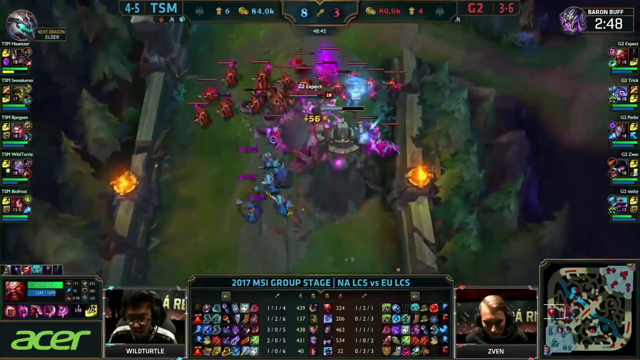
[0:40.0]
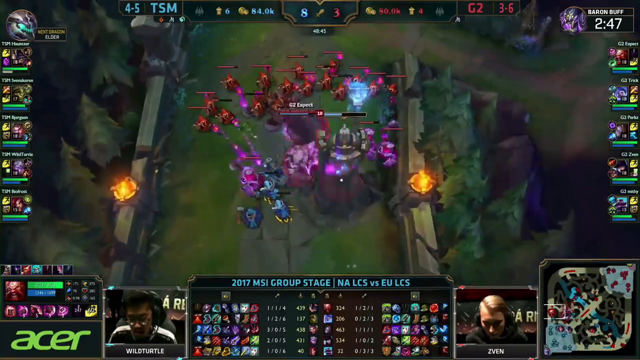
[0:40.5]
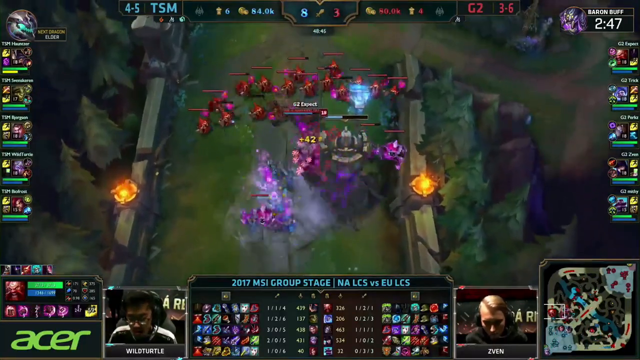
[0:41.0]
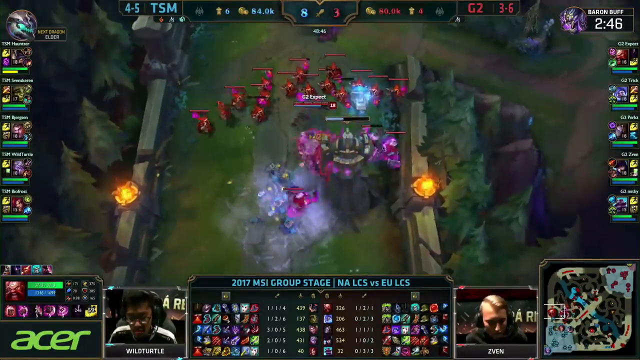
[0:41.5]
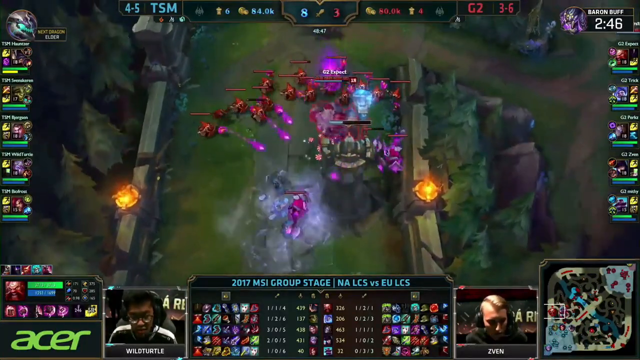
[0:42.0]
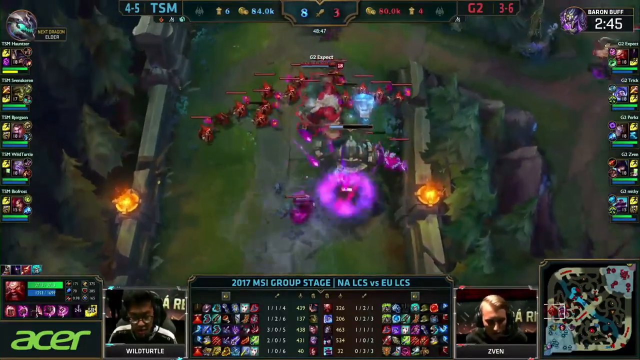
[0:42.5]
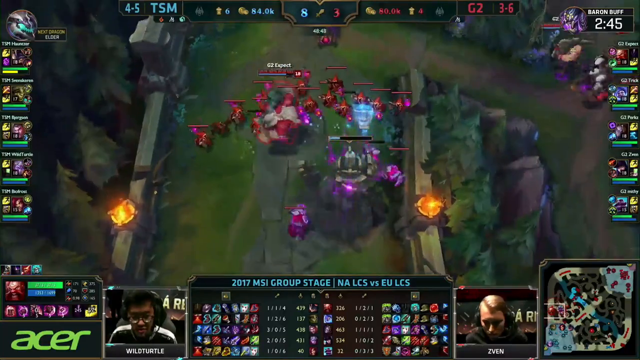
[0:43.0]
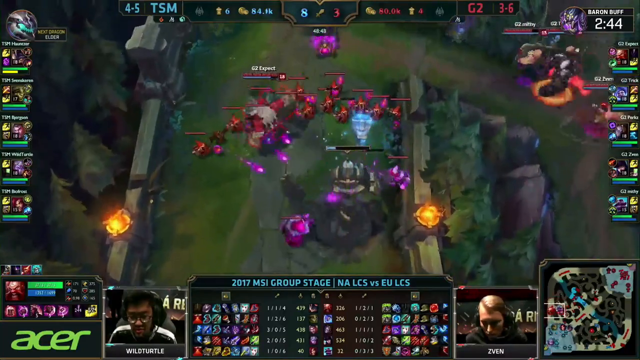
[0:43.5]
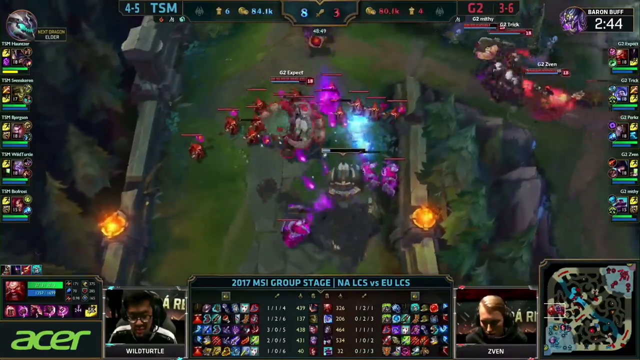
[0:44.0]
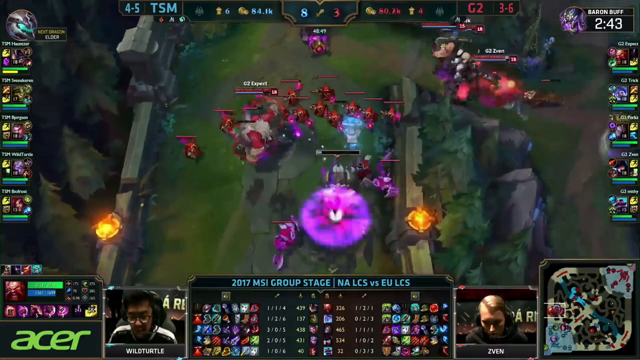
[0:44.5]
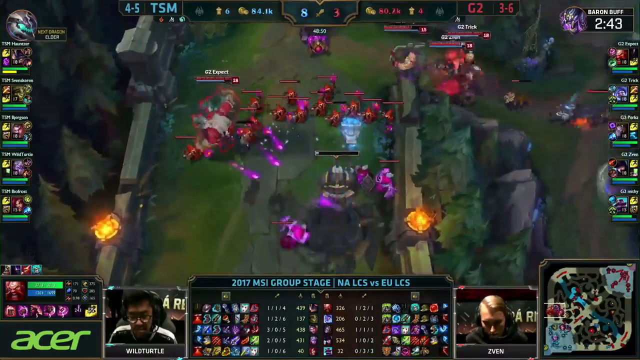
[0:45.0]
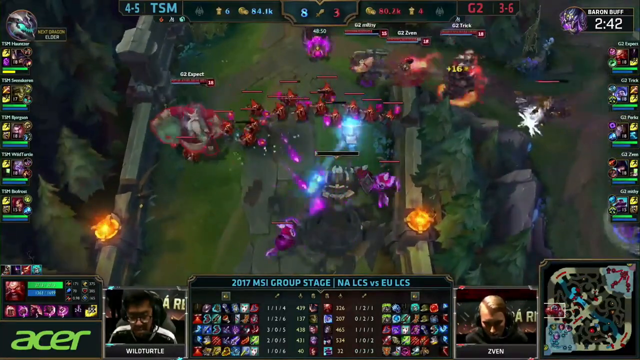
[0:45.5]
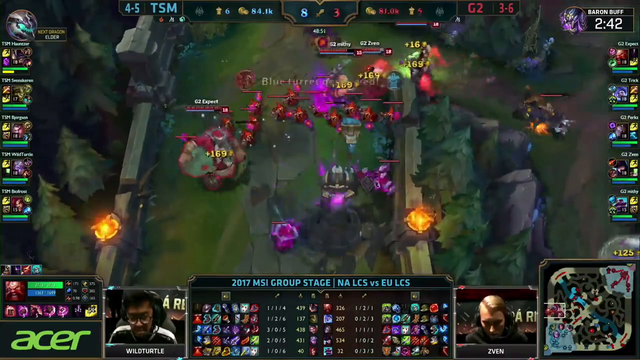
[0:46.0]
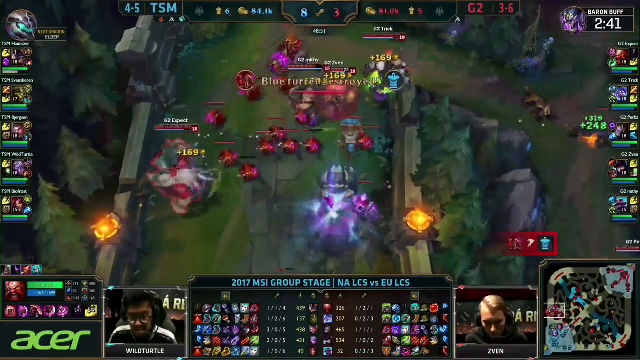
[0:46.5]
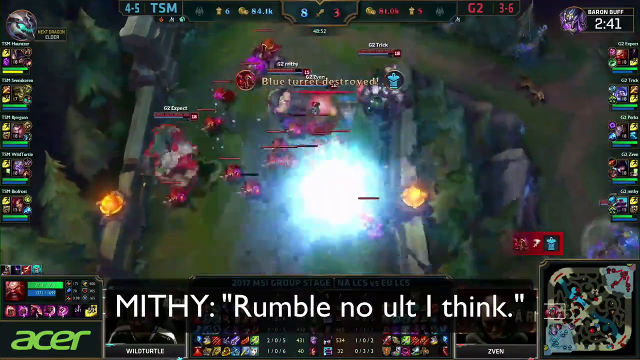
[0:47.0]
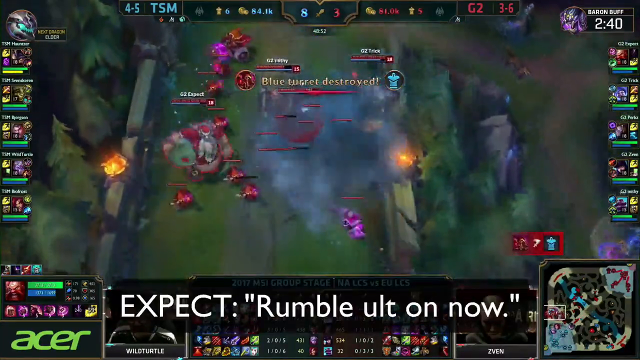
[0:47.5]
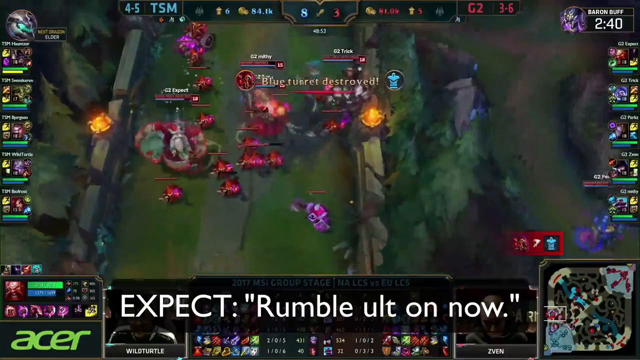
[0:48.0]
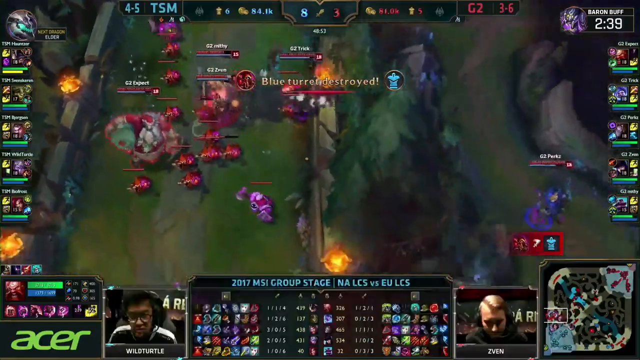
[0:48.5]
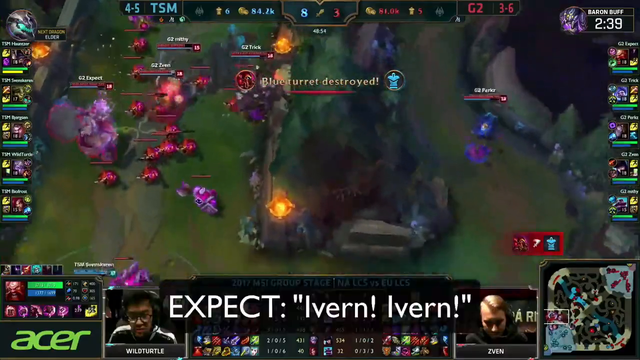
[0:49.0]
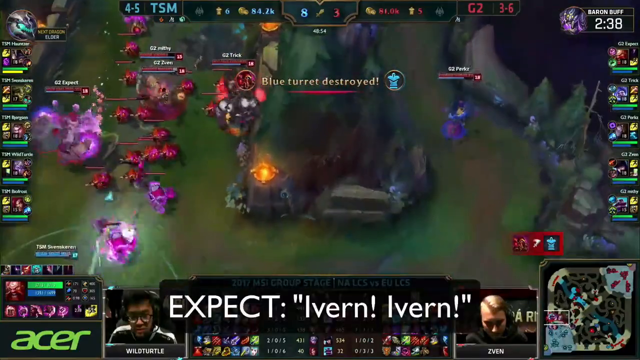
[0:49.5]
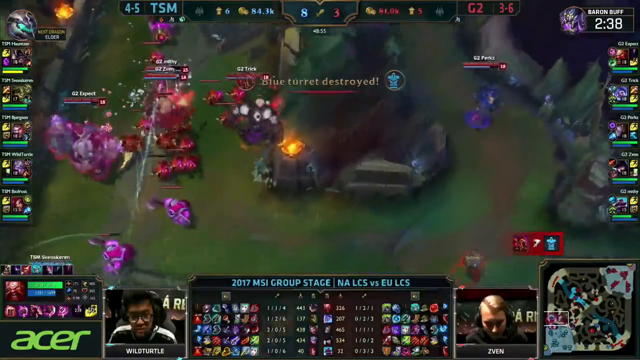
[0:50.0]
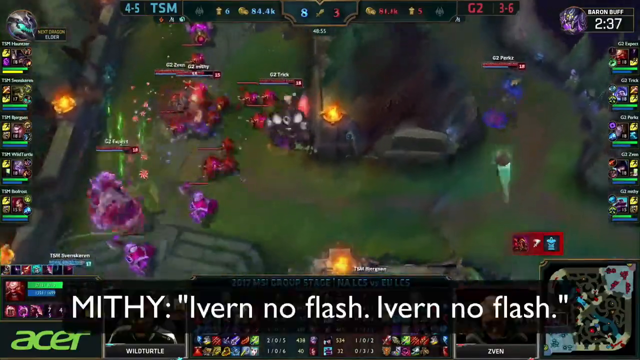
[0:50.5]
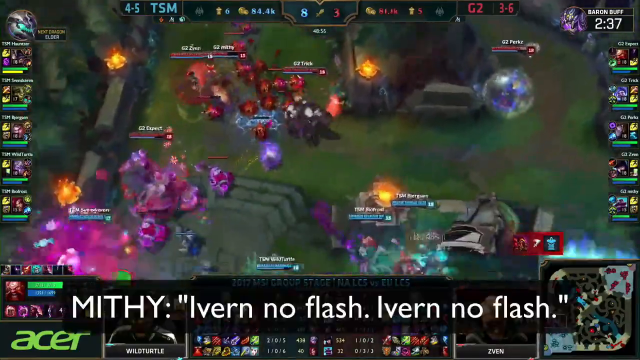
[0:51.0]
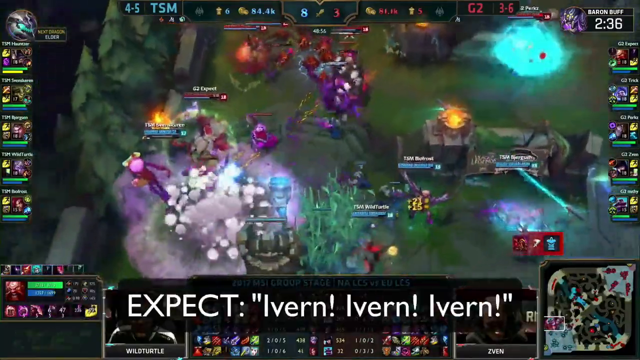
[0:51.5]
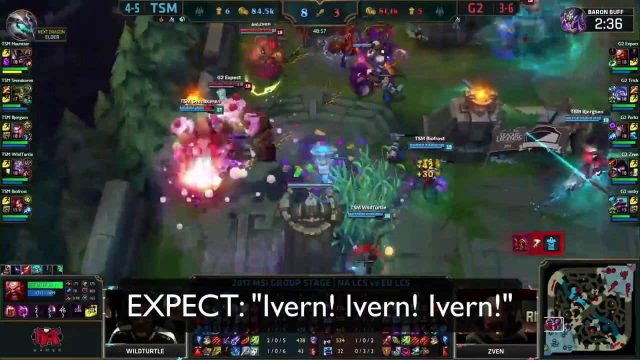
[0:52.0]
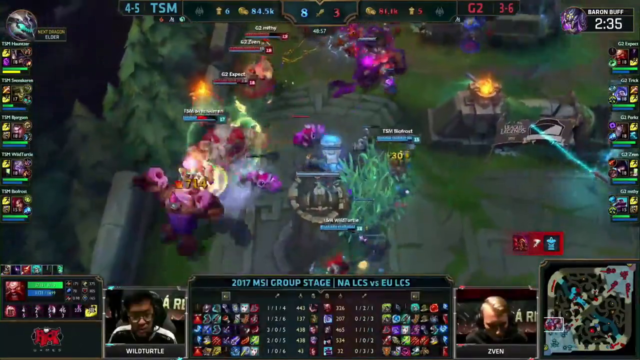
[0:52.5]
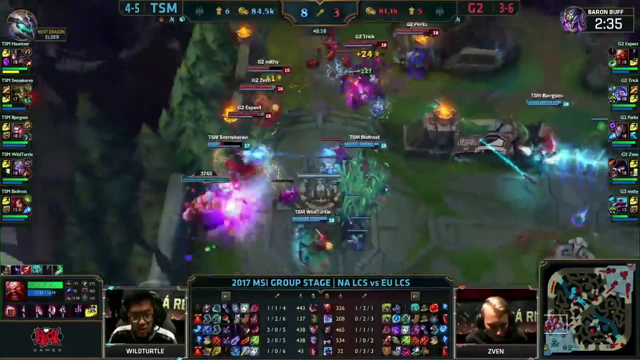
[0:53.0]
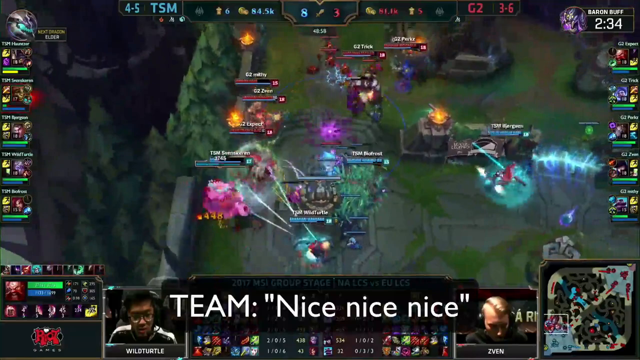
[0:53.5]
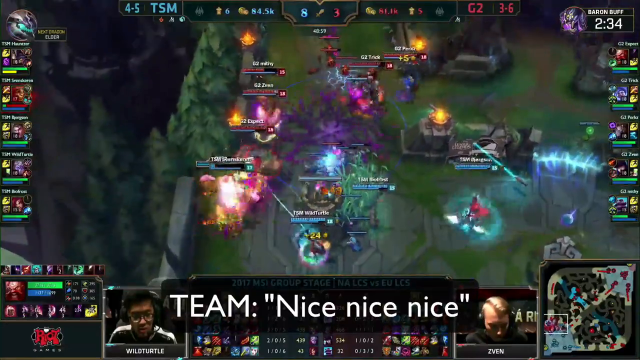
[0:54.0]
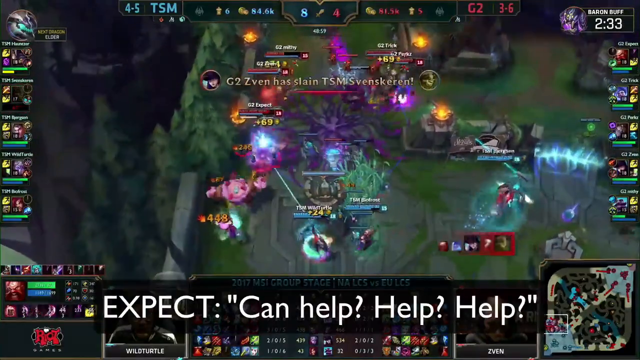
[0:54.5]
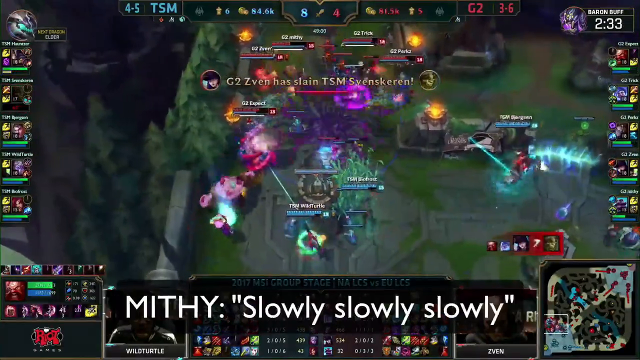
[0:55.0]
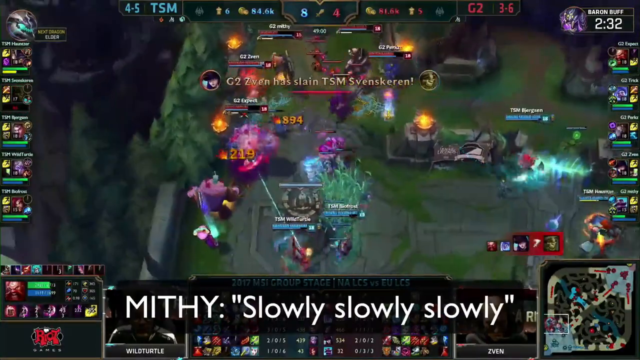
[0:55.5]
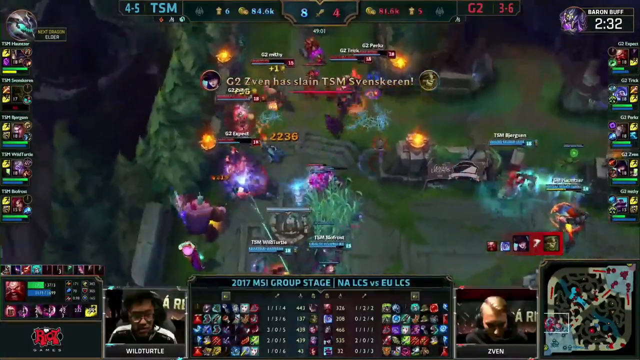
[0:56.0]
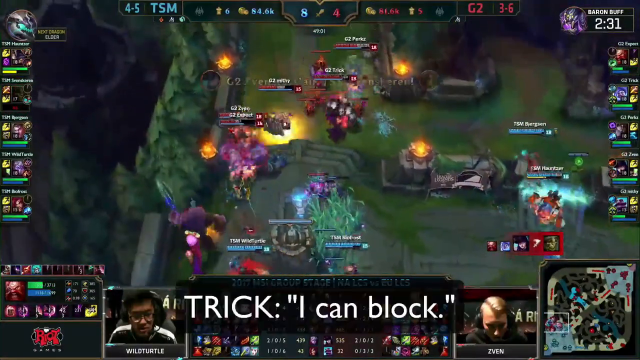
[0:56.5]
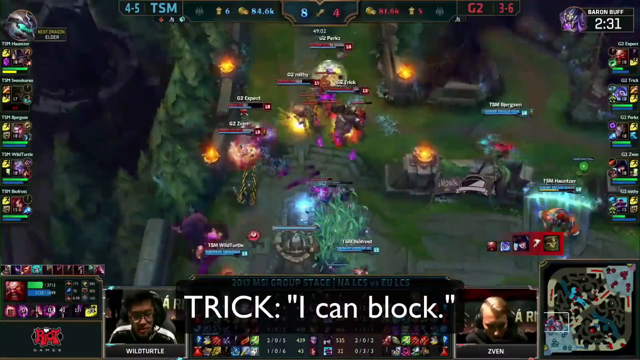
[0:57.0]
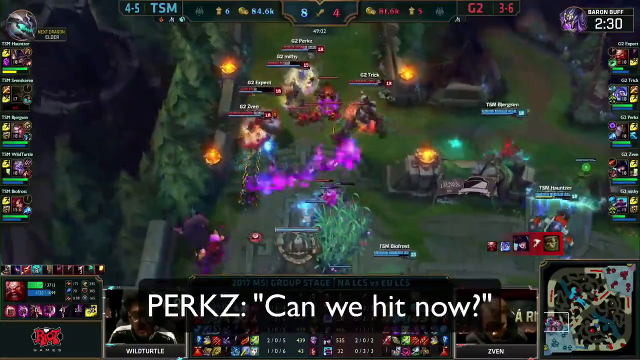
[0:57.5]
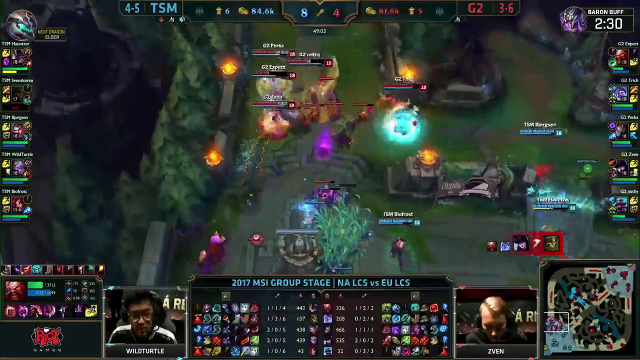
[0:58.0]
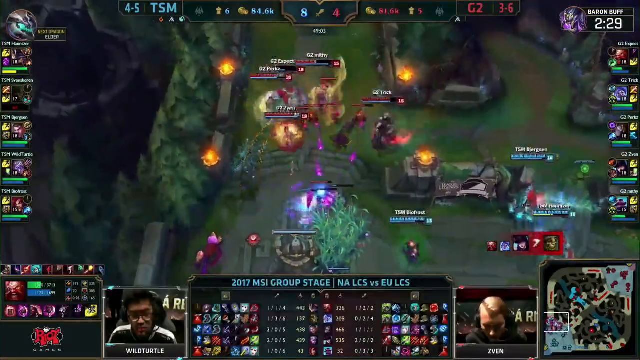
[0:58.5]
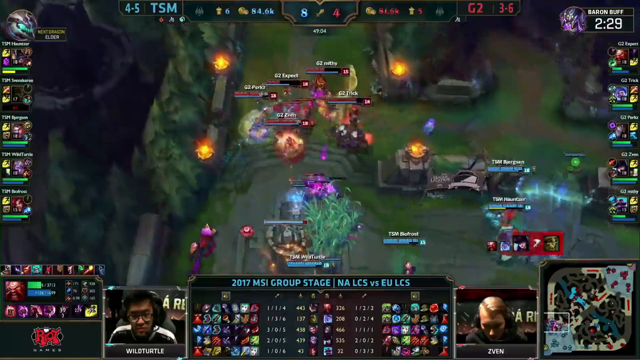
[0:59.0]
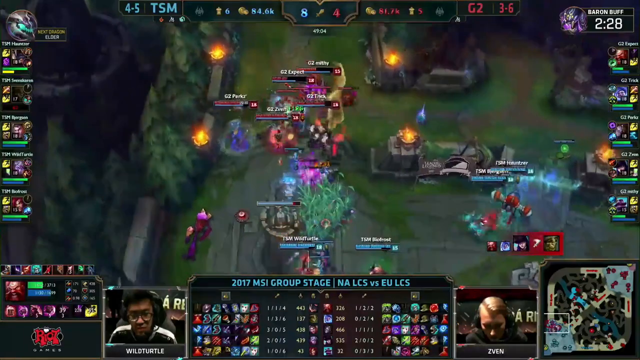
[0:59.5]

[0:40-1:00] The battle on the bridge continues. Many purple balls of energy come out of the creepers, which all seem to be controlled by the players, since they move with them as a group and attack the enemies. A big brawl starts as the camera pans straight south across the bridge, and more text pops up. The battle features lots of magic effects, mainly icy white and blue, plus some strips of flame. Several large player-controlled characters and waves of red and blue creepers fight each other. The esports players keep staring pensively at their screens, showing little emotion as they concentrate. The teams battle for control of a part of the map with many castle walls.